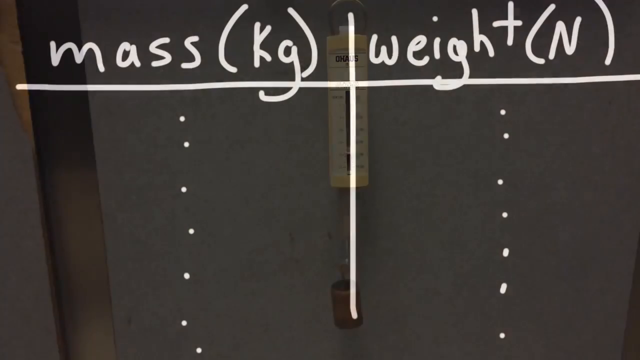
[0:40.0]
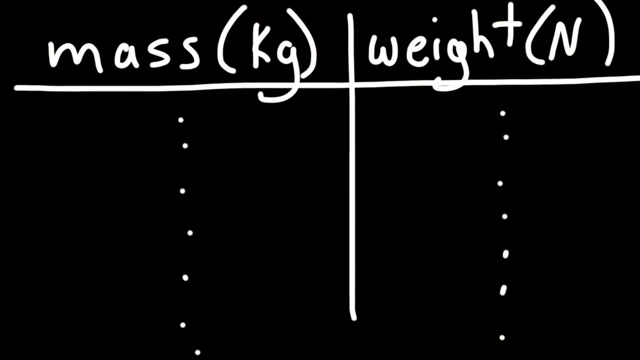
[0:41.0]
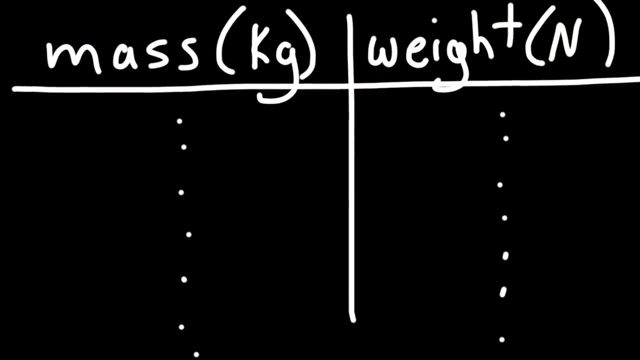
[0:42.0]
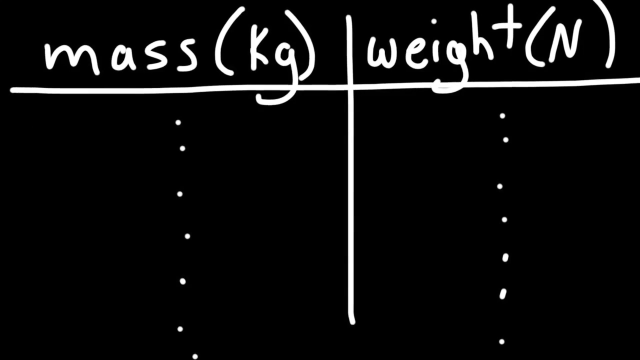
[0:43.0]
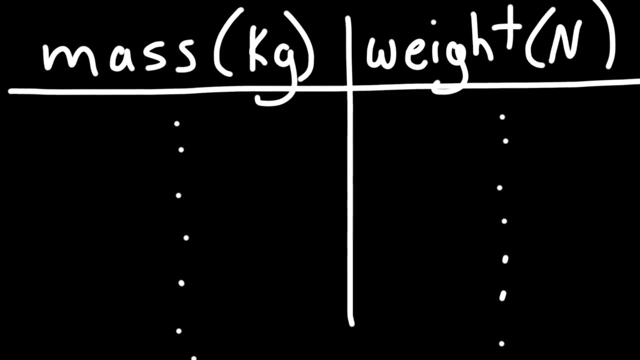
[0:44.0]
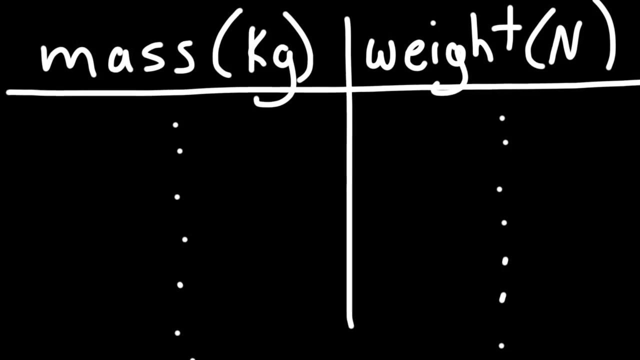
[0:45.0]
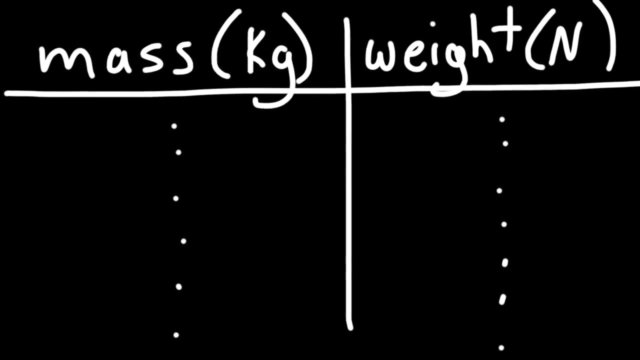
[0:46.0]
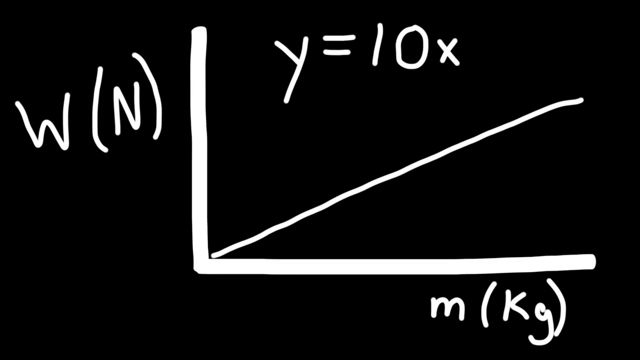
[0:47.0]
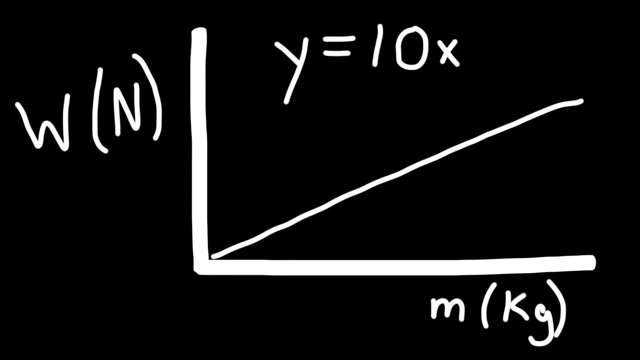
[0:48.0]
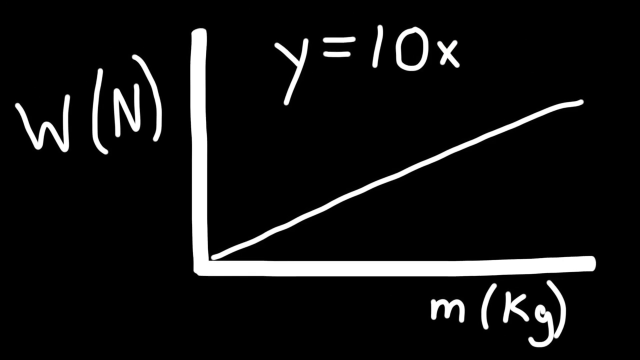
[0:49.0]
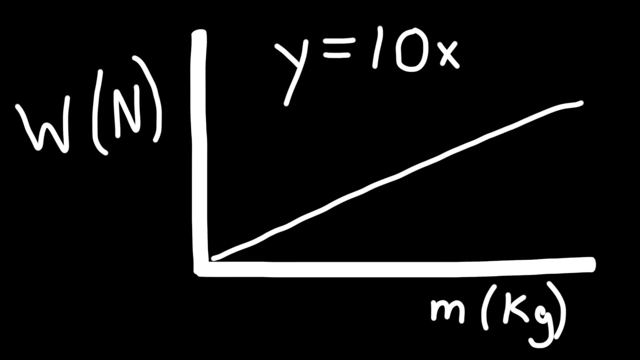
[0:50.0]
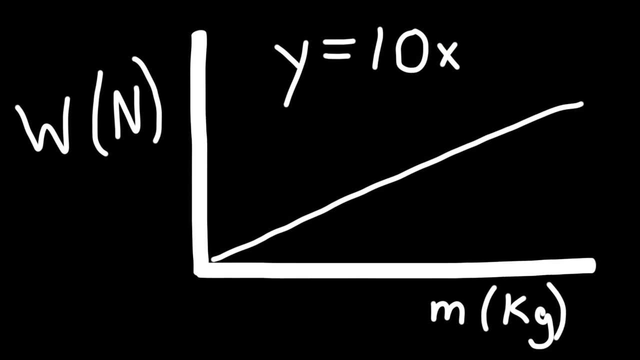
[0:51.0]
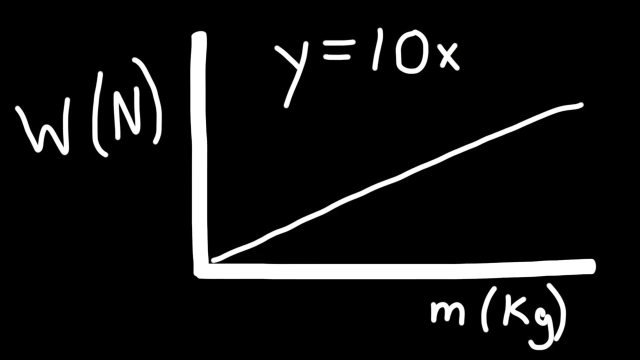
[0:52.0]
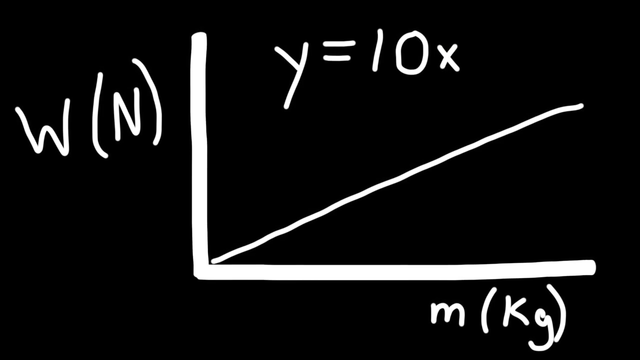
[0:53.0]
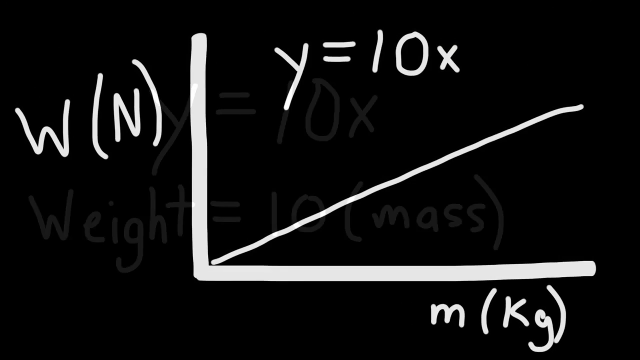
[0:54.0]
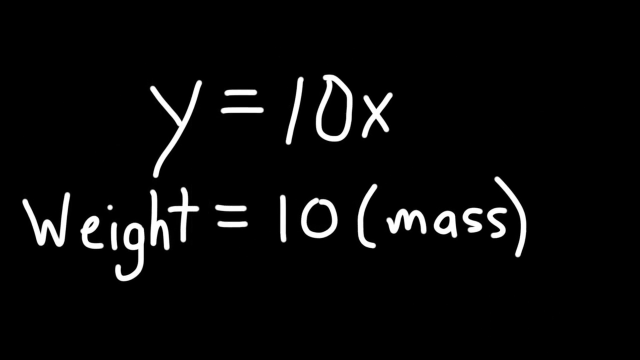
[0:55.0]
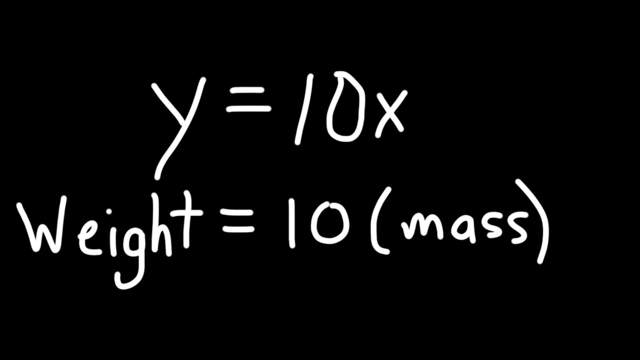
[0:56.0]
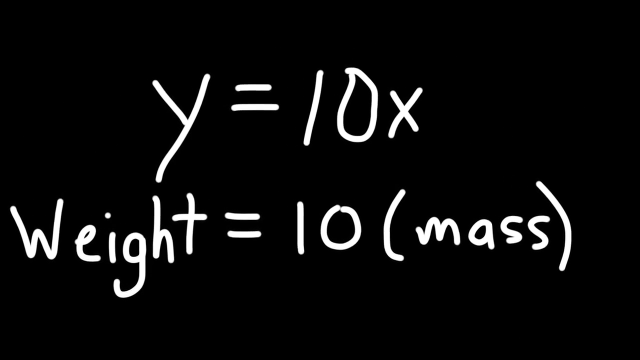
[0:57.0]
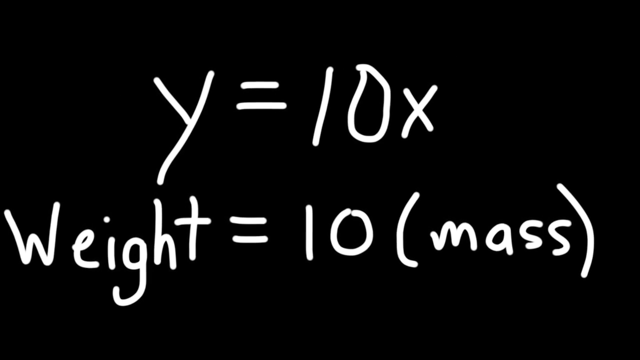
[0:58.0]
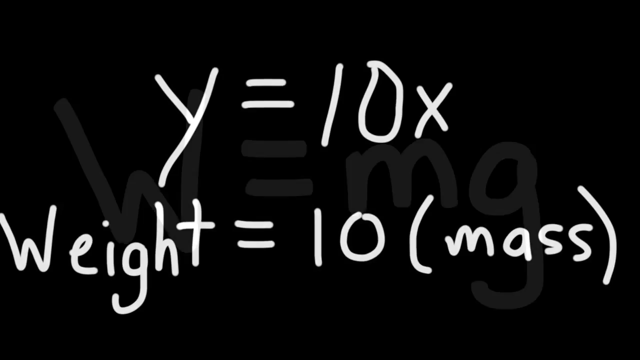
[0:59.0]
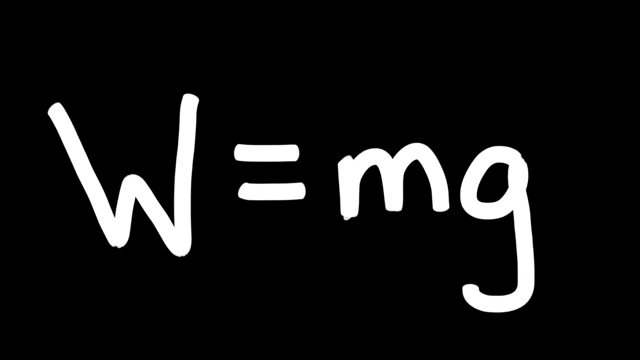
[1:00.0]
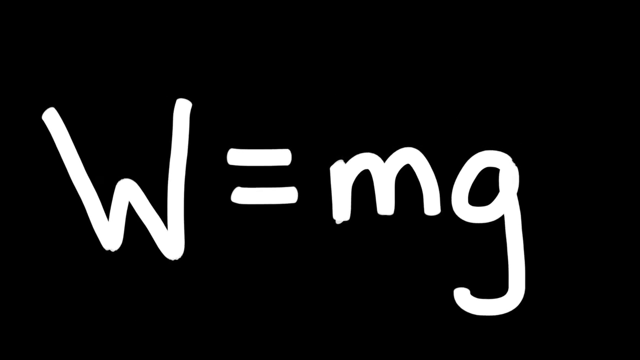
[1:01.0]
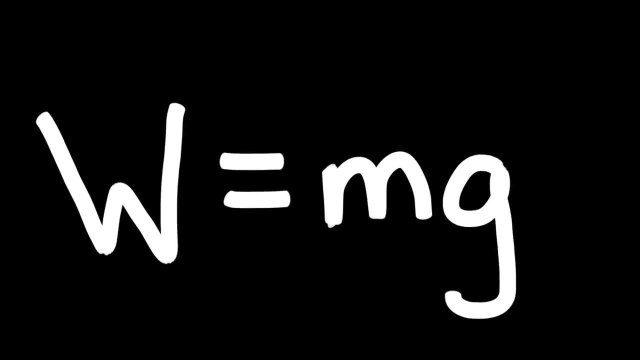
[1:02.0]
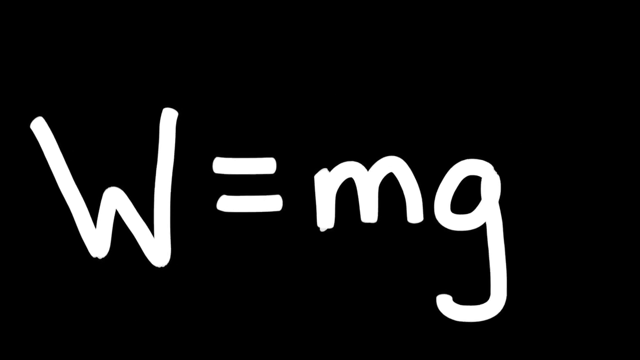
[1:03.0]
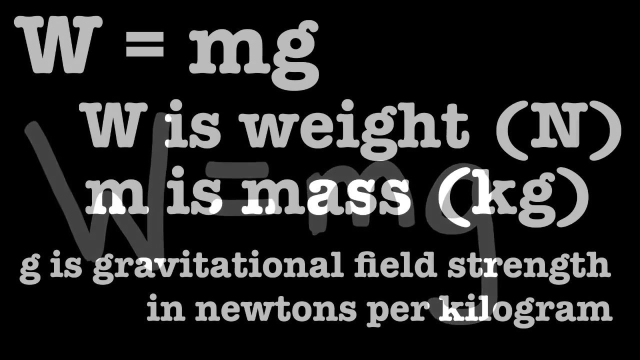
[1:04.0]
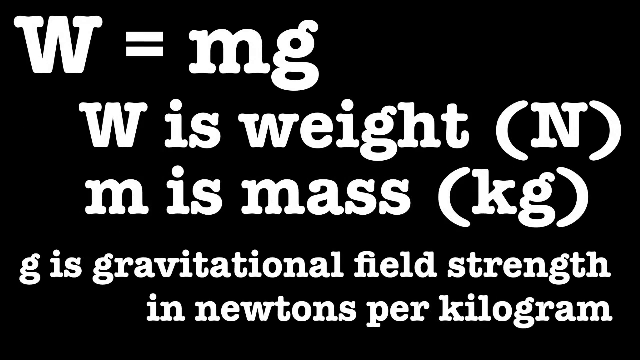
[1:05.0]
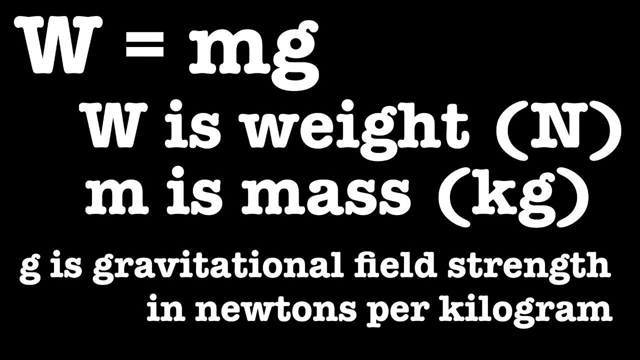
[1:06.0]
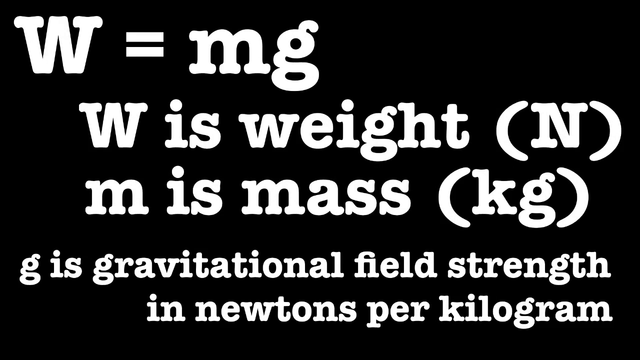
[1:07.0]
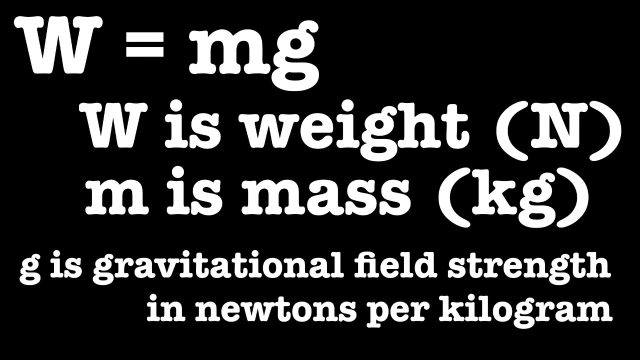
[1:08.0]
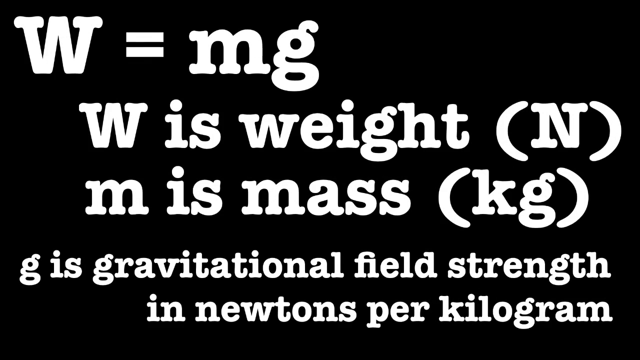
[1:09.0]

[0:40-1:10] A scale is in the background with the image darkened. A line runs across sort of the top of the screen, and another line runs up the middle of the screen. There are six white dots to the left of the vertical line and six to the right, possibly seven on each side. Above the horizontal line, white text reads "mass (kg)" and, to the right of the vertical line, "weight (n)." The screen turns black, showing just the lines and the words mass and weight. Then, on a black screen, "w (n)" appears on the left, with a vertical line running down that makes a 90-degree angle toward the right of the screen. A line in the center of this angle runs from the bottom left to the top right. At the top of the screen it reads "y = 10x," and below the horizontal line it reads "m (kg)." Next, a black screen shows "y = 10x" with "weight = 10 (mass)" below it, followed by another black screen reading "W = mg." Everything is in white letters. Then a black screen reads "W = mg," with "W is weight (N)," "m is mass (kg)," "g is gravitational field strength" and "in newtons per kilogram" listed below.